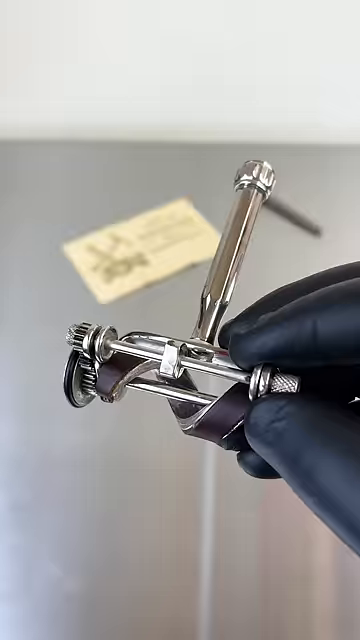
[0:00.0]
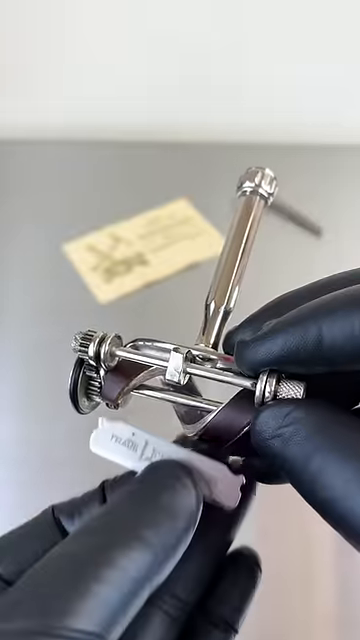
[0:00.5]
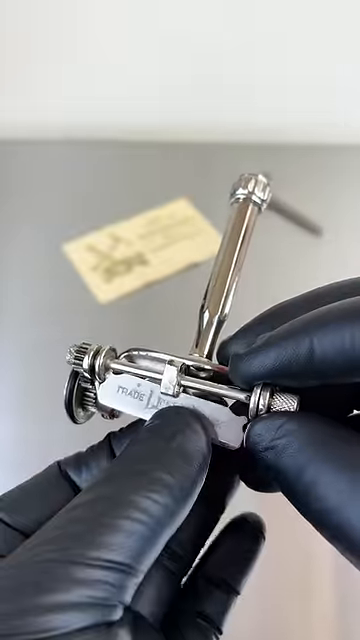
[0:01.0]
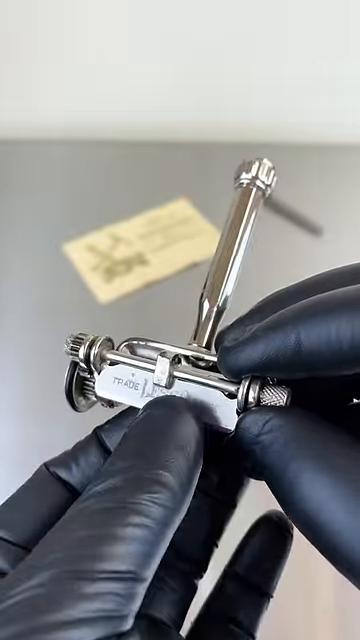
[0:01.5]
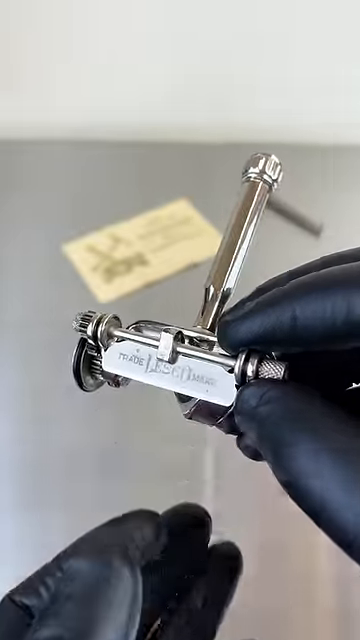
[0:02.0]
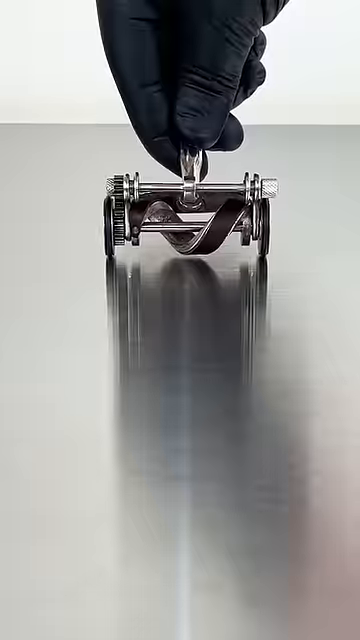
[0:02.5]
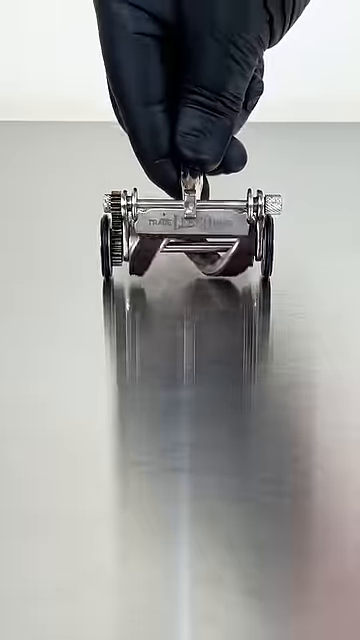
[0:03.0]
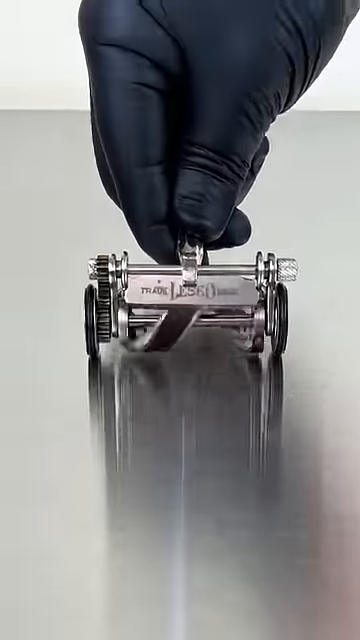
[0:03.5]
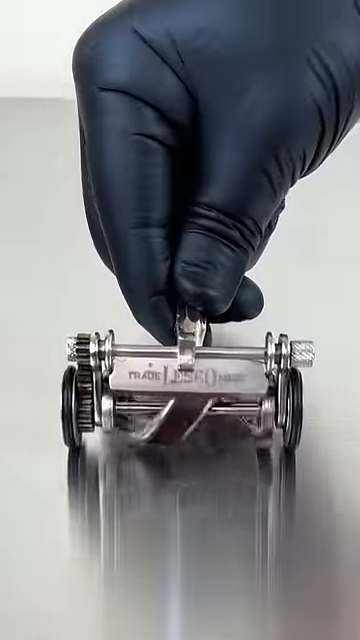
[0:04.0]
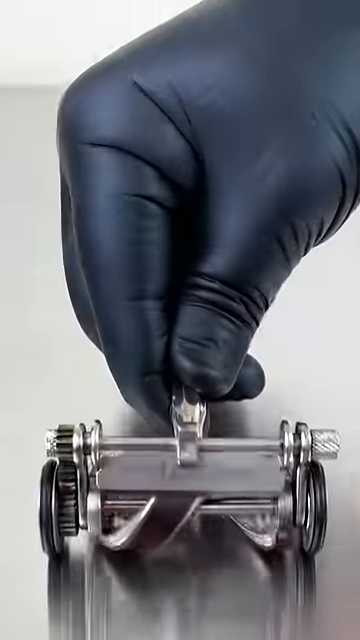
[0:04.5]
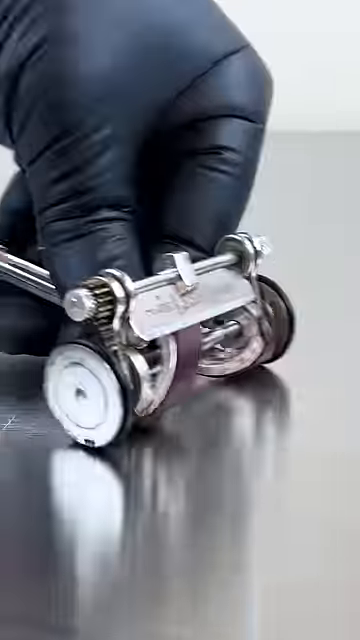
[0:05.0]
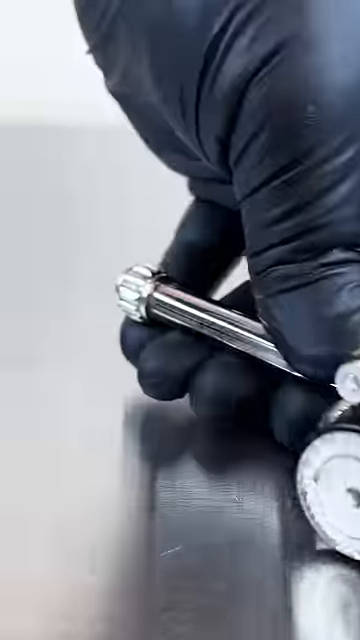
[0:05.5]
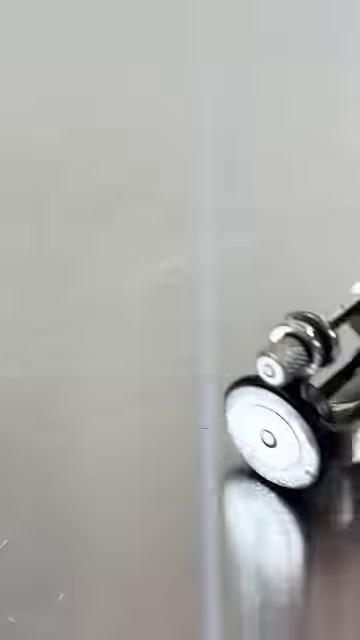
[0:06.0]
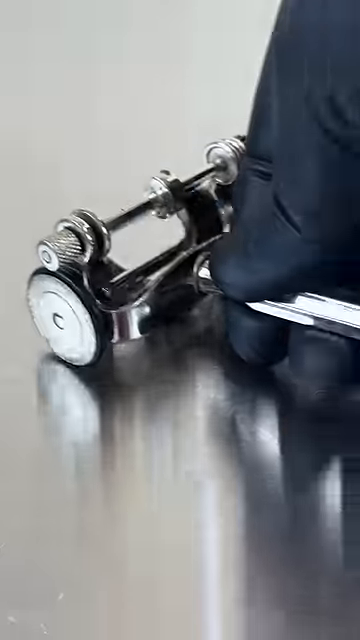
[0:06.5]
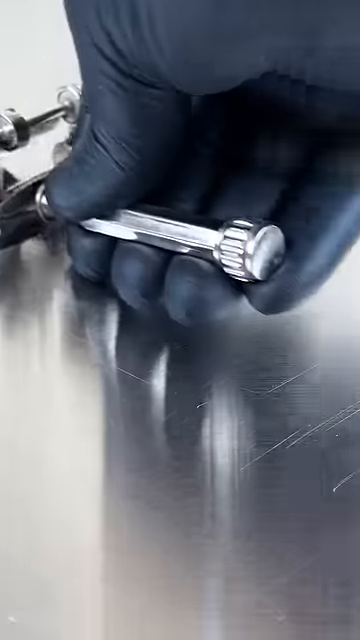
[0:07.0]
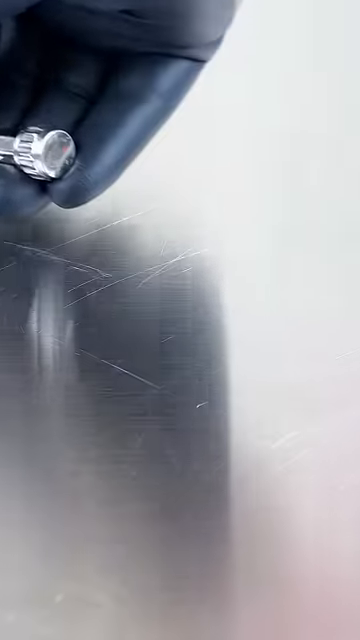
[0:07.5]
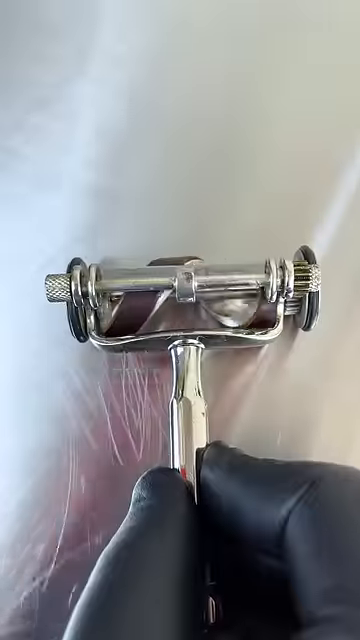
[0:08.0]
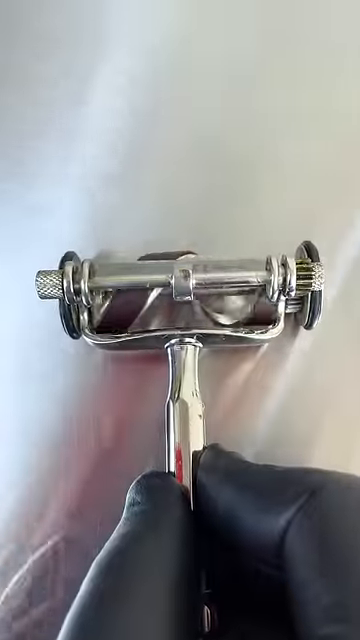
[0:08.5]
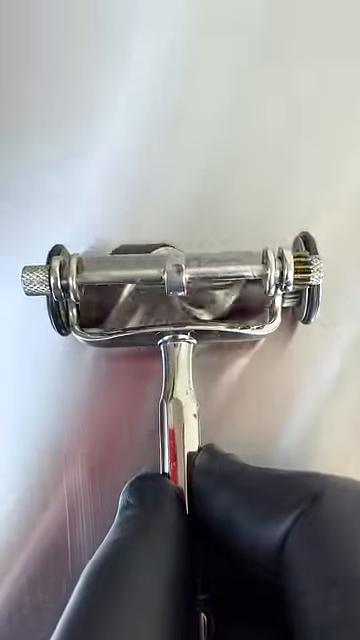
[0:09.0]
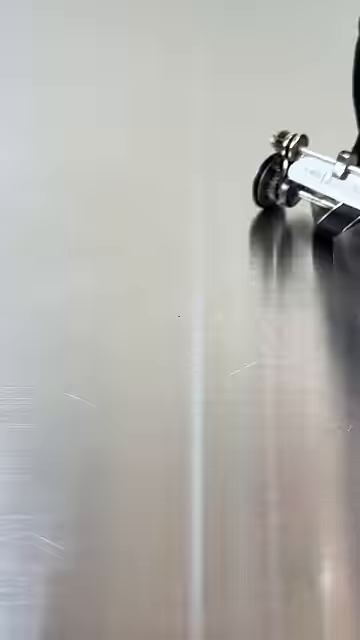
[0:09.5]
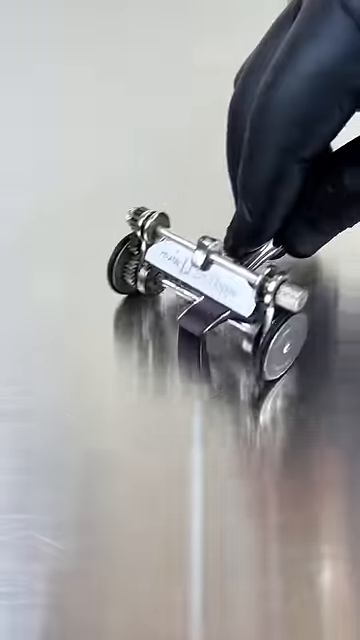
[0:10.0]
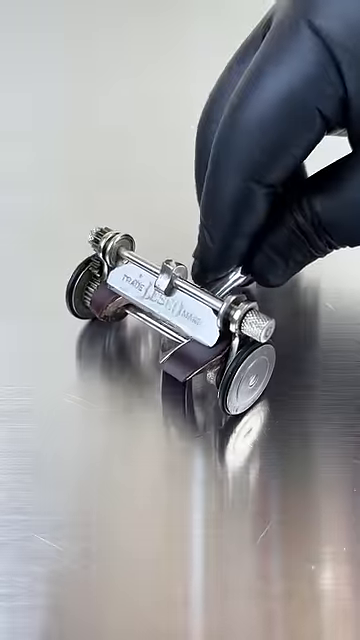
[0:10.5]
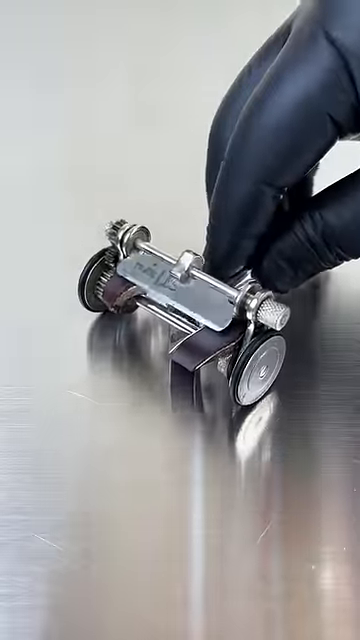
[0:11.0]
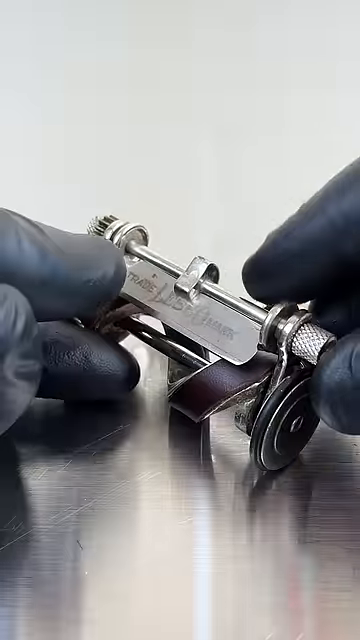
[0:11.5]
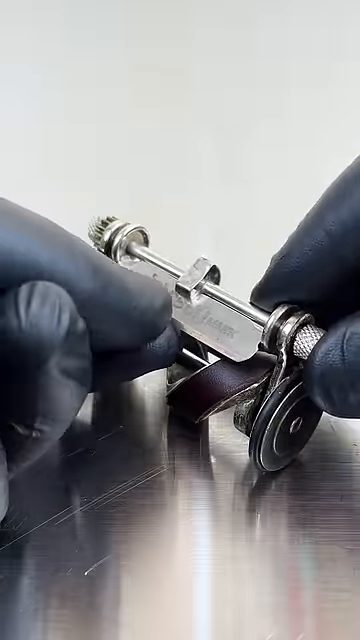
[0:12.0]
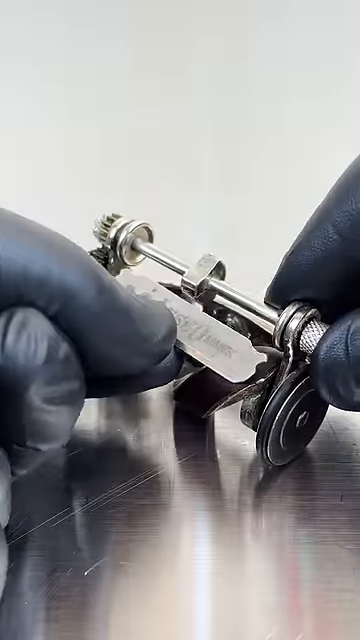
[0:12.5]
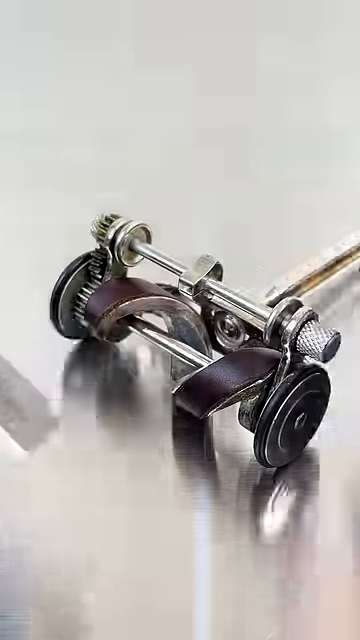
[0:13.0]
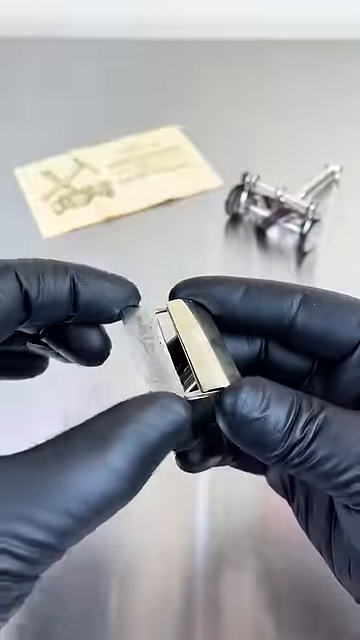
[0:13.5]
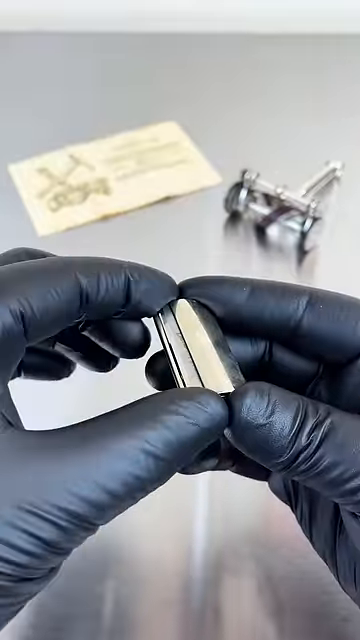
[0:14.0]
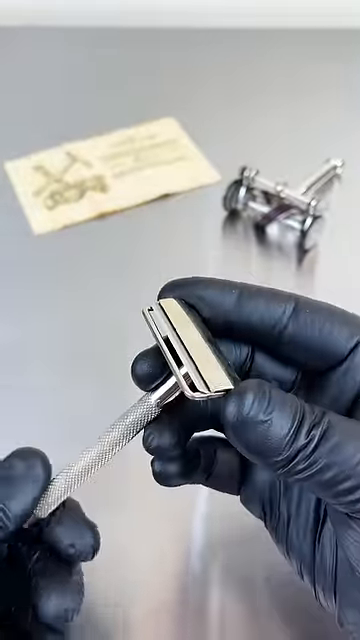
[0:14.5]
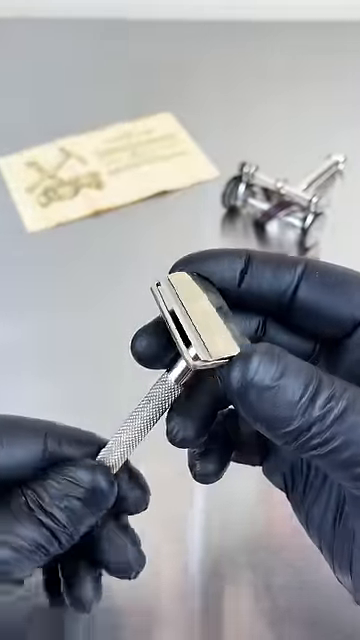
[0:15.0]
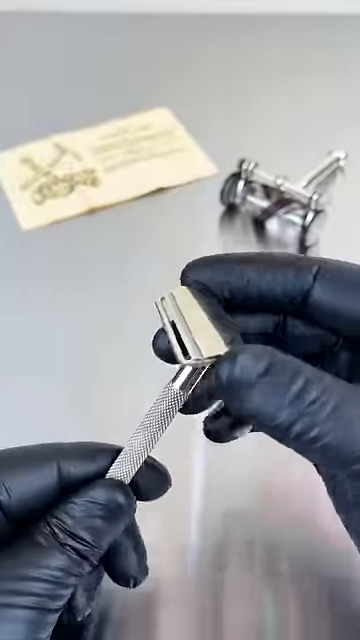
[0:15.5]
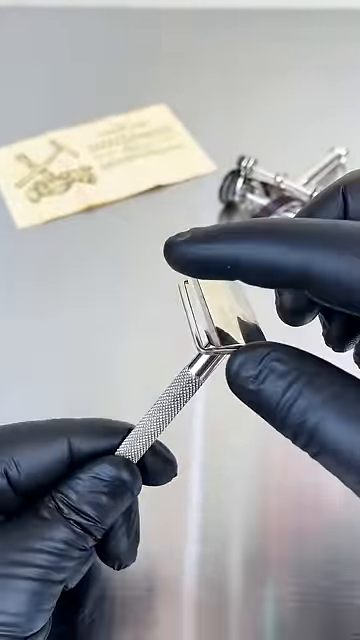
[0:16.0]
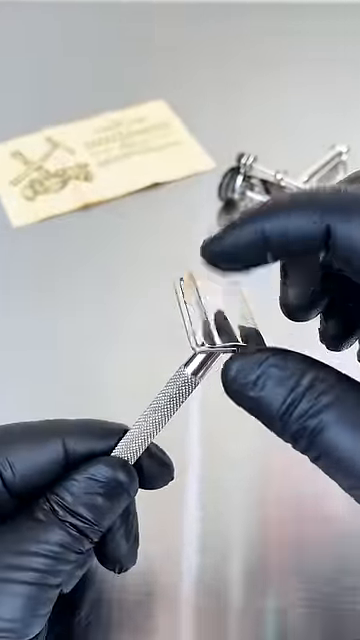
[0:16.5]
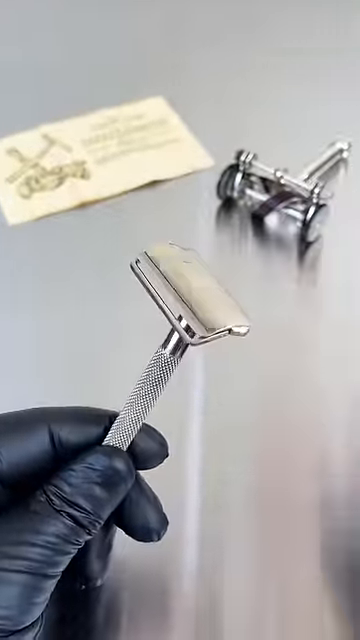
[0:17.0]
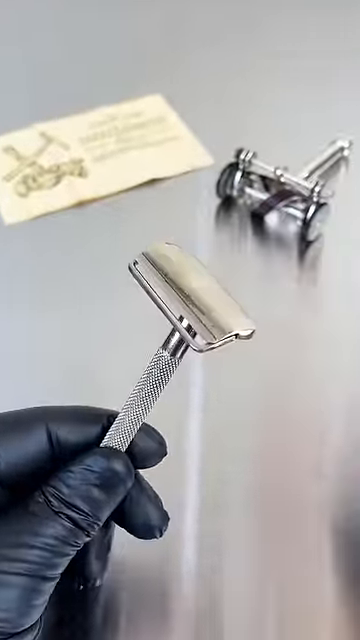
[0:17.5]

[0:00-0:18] Shot in portrait mode, the video is titled 1909 Leslie Lawn mower Razor blade. It opens on a close-up of a pair of hands in black rubber gloves holding a little metal replica of a lawnmower, the old-school kind that is pushed, has no motor, and has visible circular blades. The angle changes, and the man's hand pushes the little replica against a chrome metal surface, rolling it toward the camera, and the blade area rotates as the wheels turn. He rolls it while it is seen from a few different angles. He then takes a metal piece off, revealing a little brown strip of leather underneath, which is what was moving when the wheels were spinning. He takes a razor blade off the little lawnmower and puts it back into a chrome face-shaving razor.